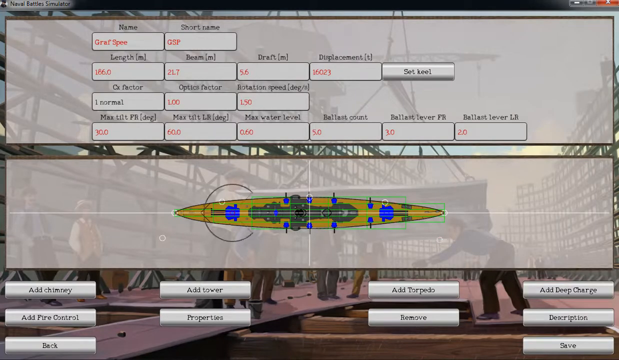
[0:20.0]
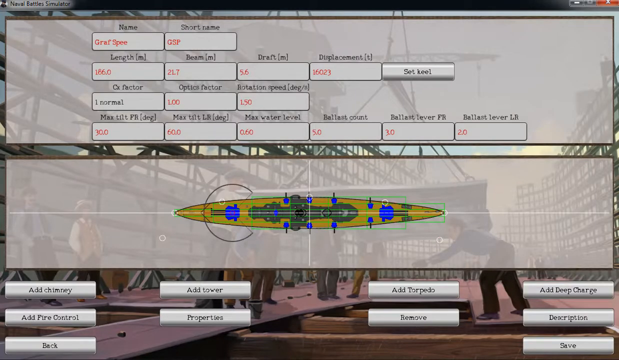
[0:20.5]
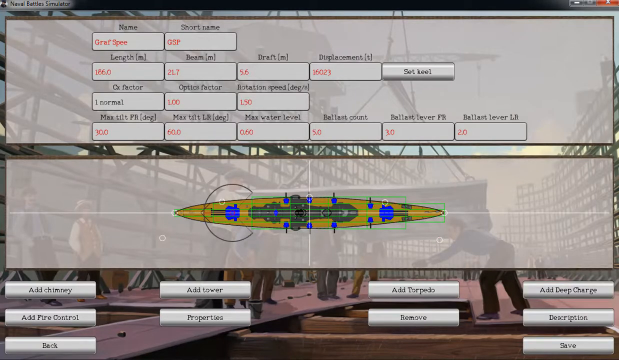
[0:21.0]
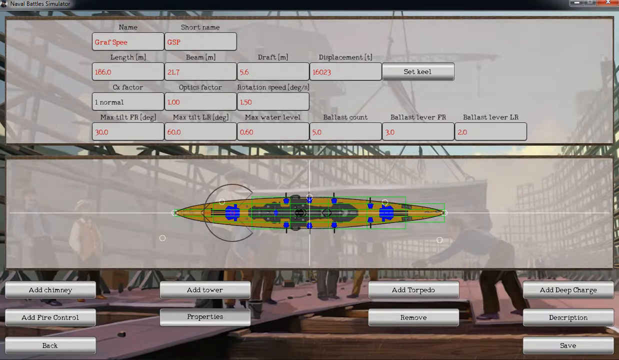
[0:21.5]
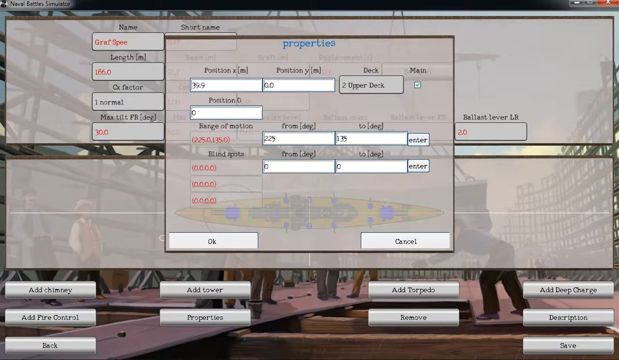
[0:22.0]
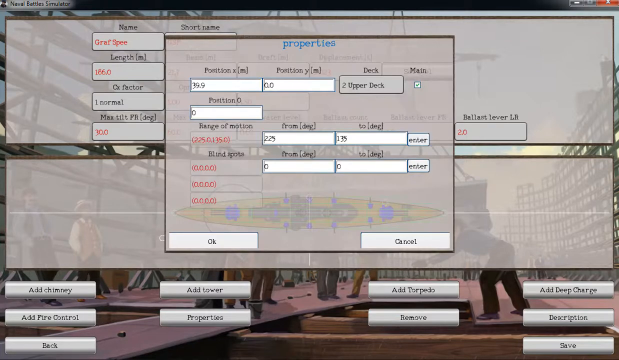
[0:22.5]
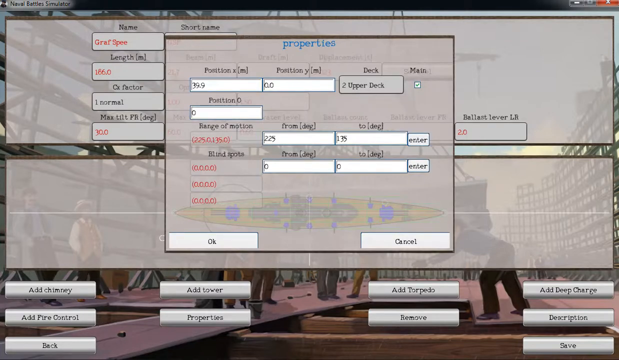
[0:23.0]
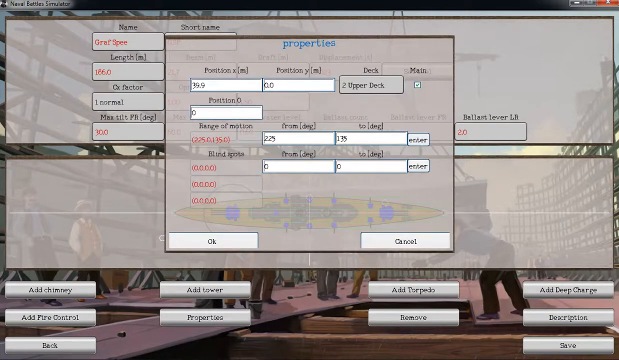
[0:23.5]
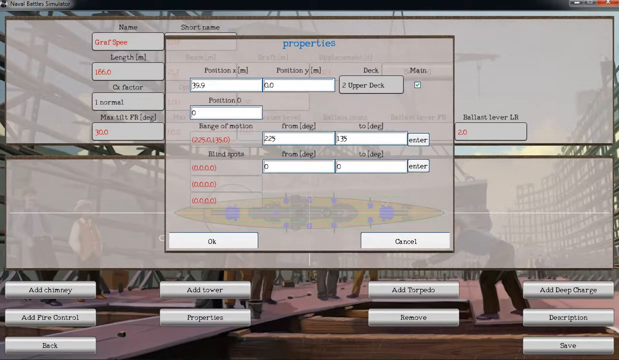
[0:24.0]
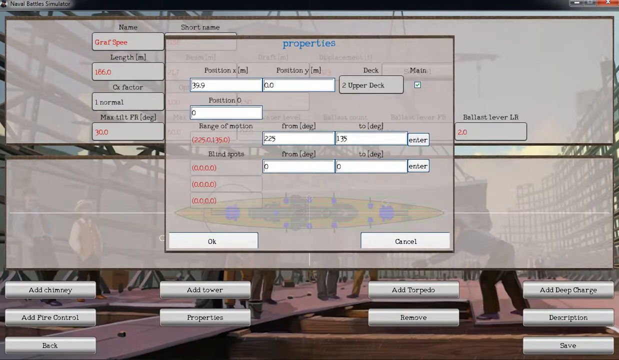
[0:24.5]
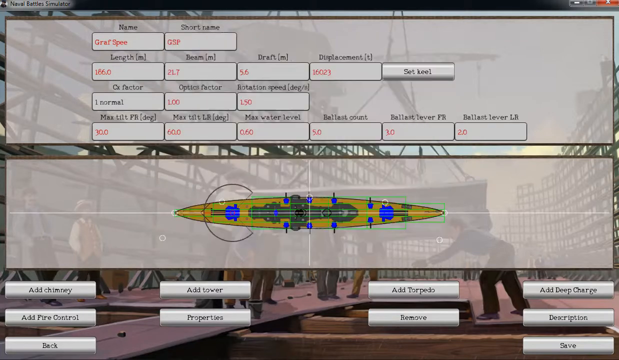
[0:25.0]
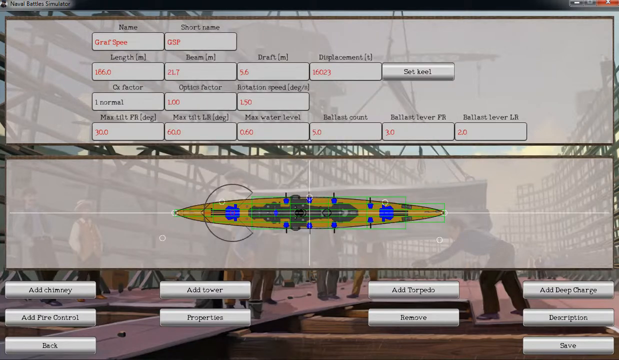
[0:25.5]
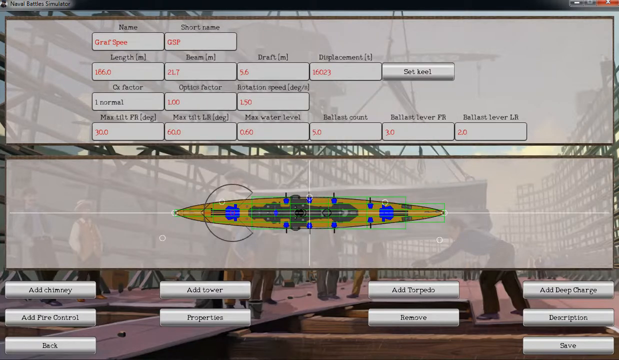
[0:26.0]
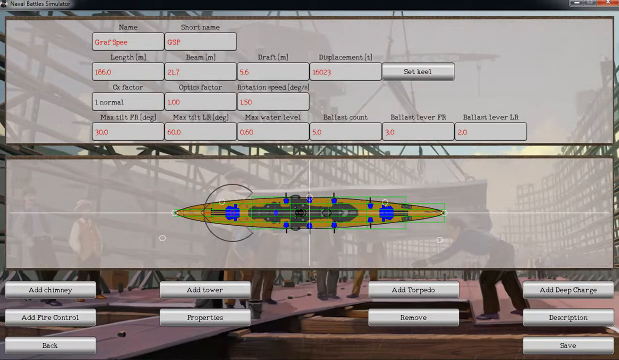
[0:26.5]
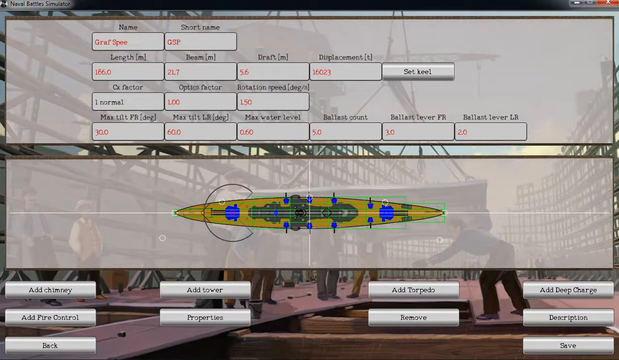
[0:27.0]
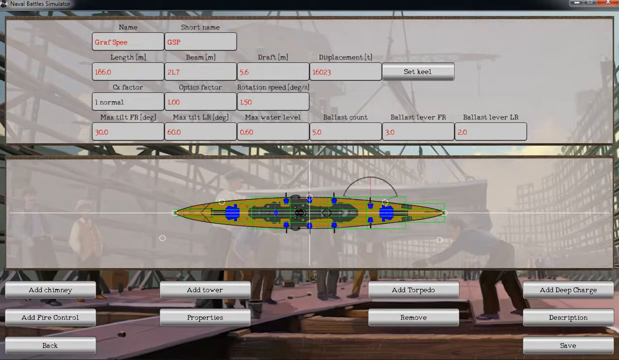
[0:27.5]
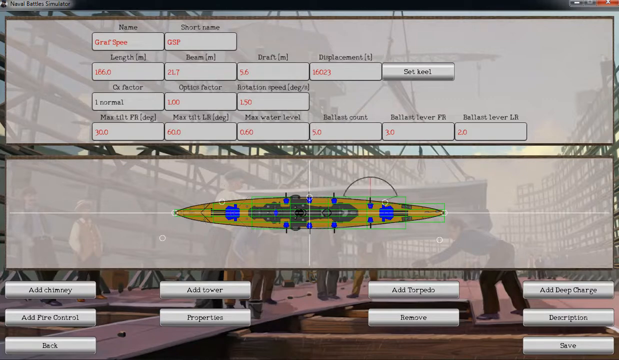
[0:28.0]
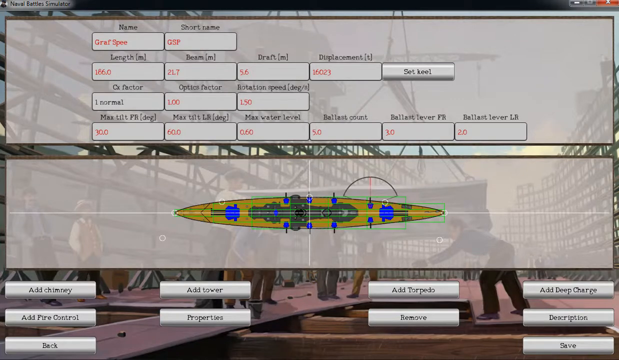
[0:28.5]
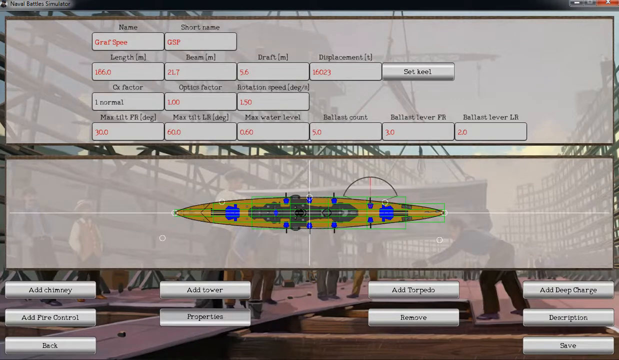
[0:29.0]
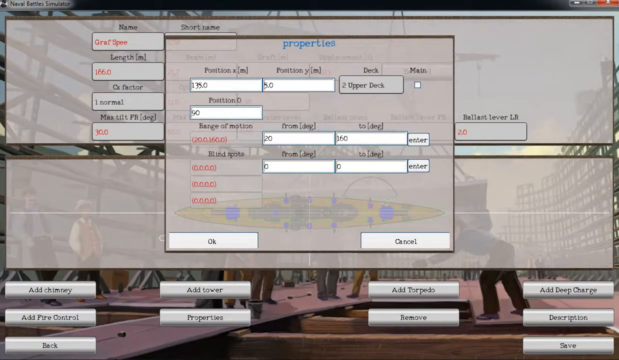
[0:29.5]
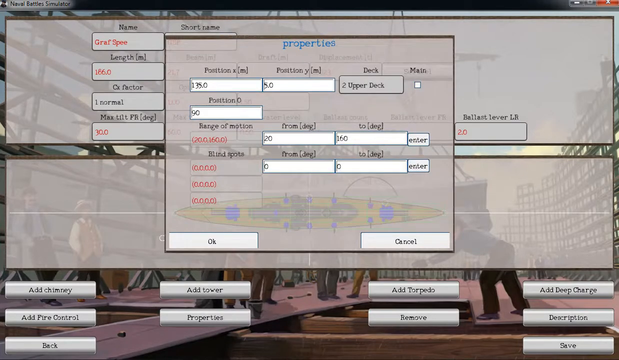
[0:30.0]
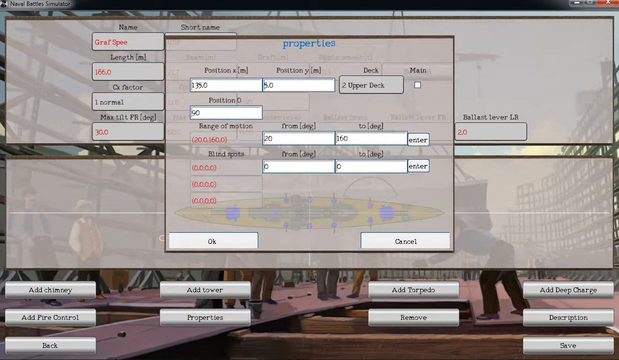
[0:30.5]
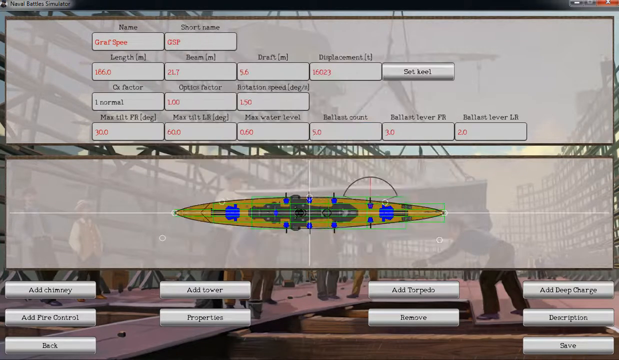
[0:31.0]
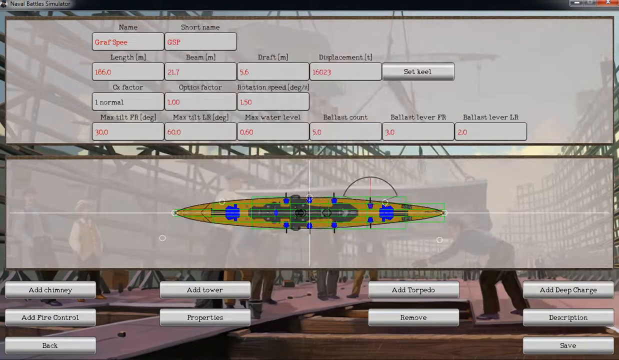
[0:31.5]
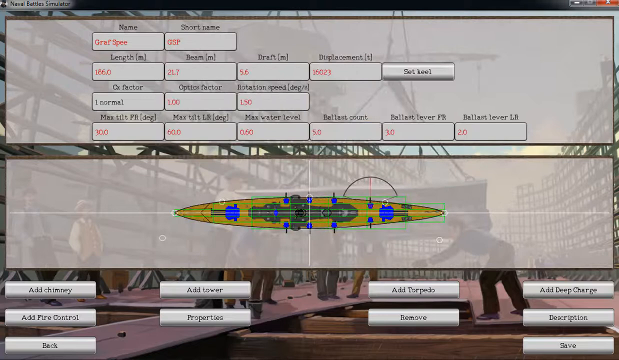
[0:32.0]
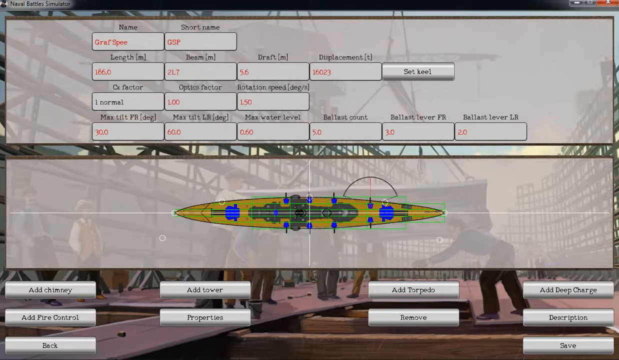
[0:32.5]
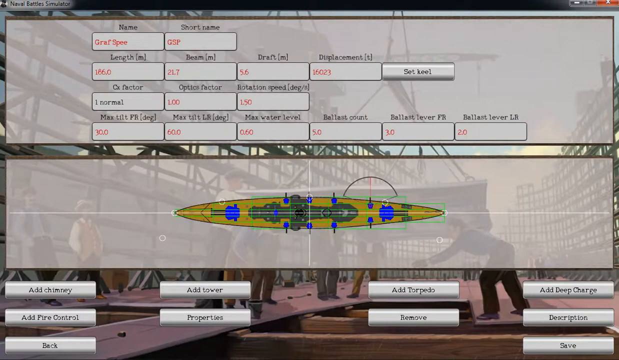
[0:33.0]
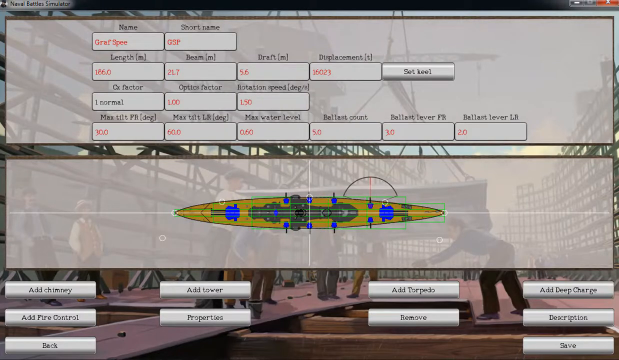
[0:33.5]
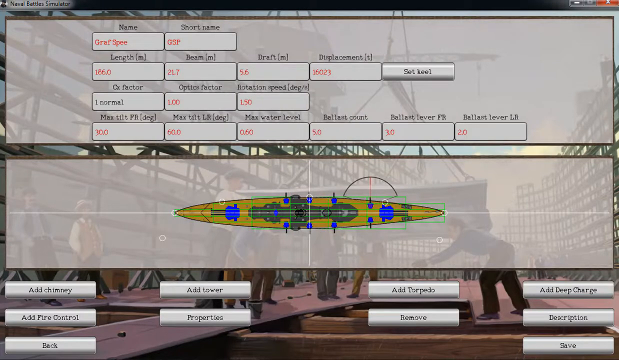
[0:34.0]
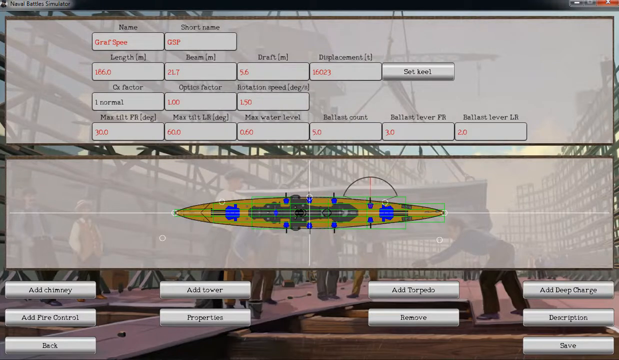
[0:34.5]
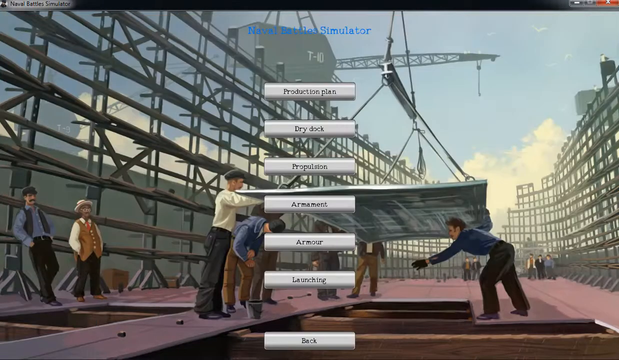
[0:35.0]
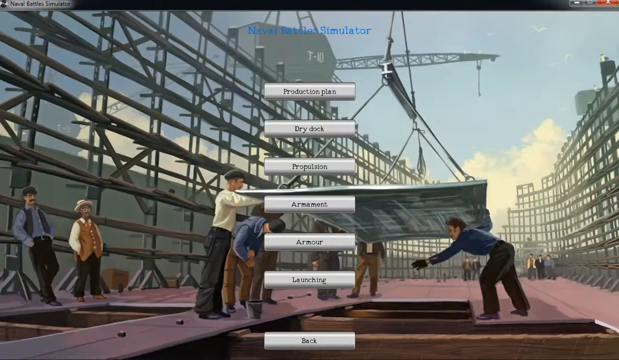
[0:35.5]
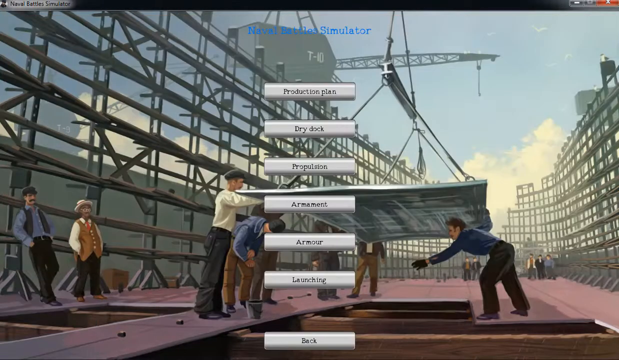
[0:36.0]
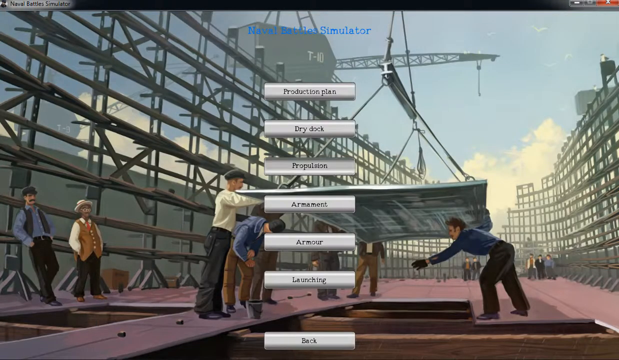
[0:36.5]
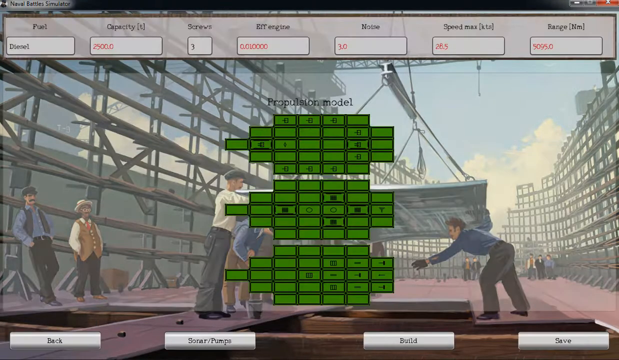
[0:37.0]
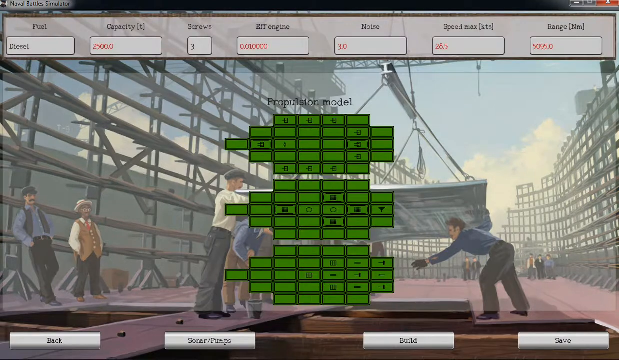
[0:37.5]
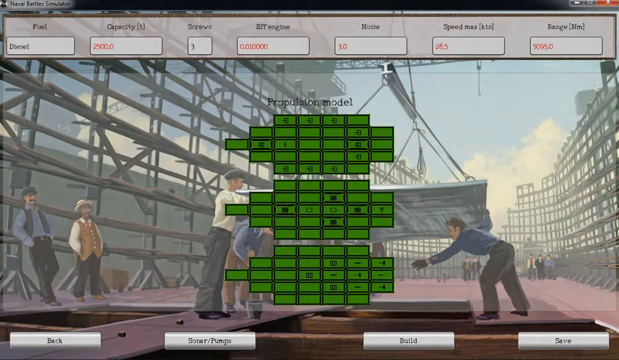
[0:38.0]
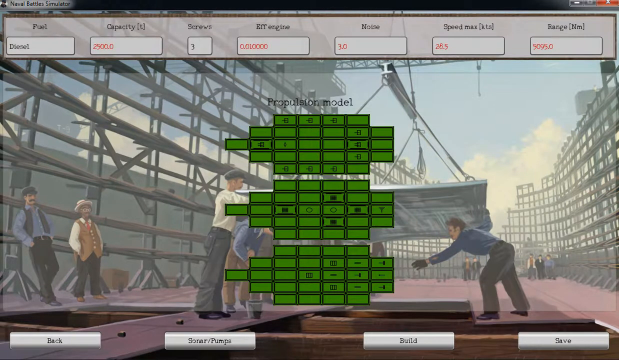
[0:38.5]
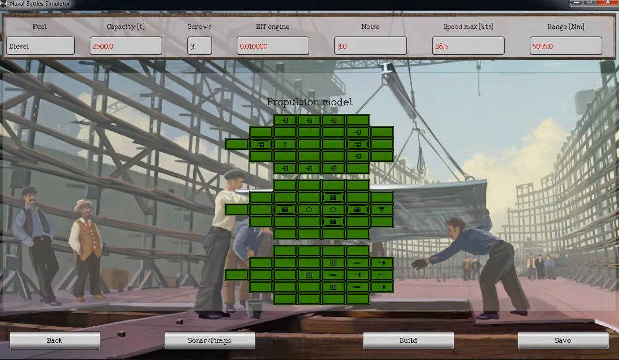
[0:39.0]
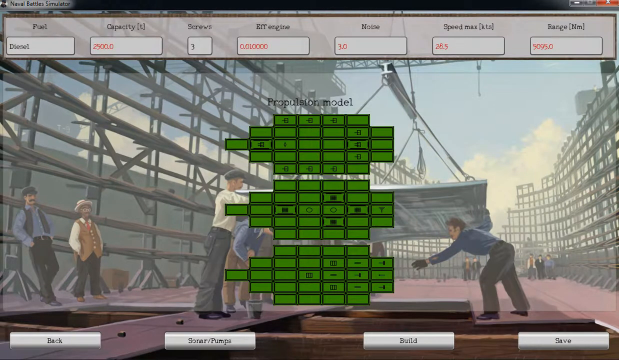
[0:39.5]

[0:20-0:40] A white screen has a bunch of rectangular buttons and two very large rectangular buttons. One of the bottom rectangles holds a boat blueprint; the boat is yellow with blue and green in it. This is in front of the workers outside: seven men kind of working on a boat, kind of dressed from the 1920s. The person on the computer pulls up the page with the six buttons, then a page with a bunch of green rectangular objects, probably around 30 small ones that look like little pieces of money, grouped in large brackets of about three. At the top are six rectangular boxes for typing in different amounts of information. People are kind of standing off to the side where the men are working. The person on the computer kind of just moves the mouse around.